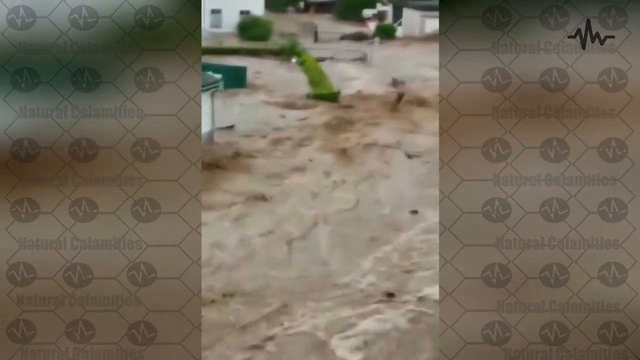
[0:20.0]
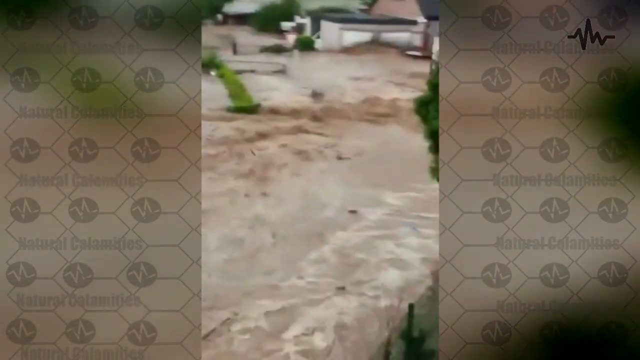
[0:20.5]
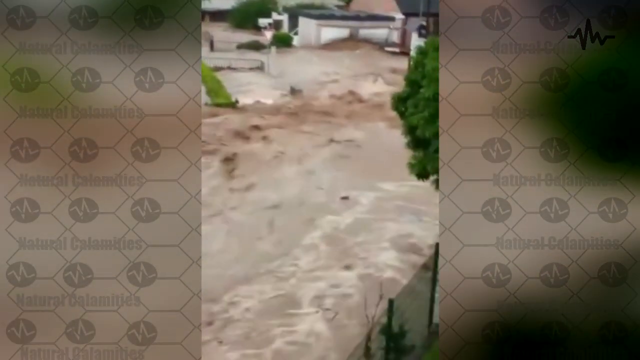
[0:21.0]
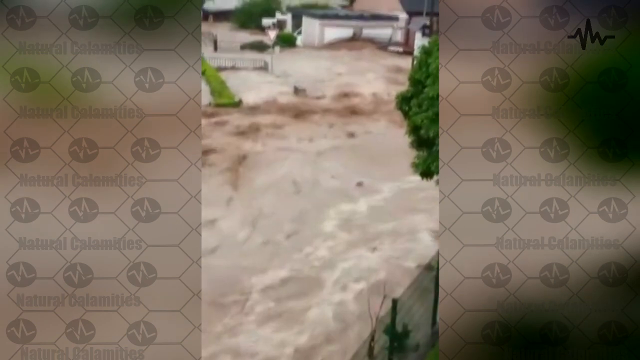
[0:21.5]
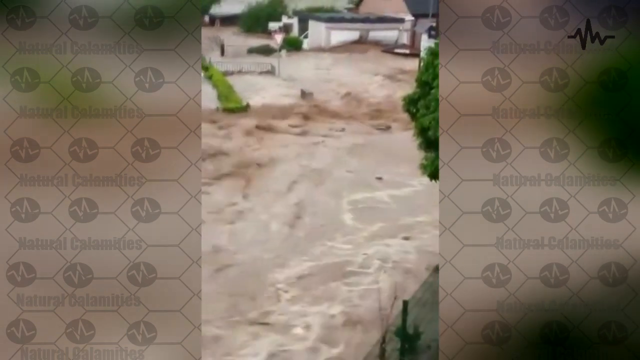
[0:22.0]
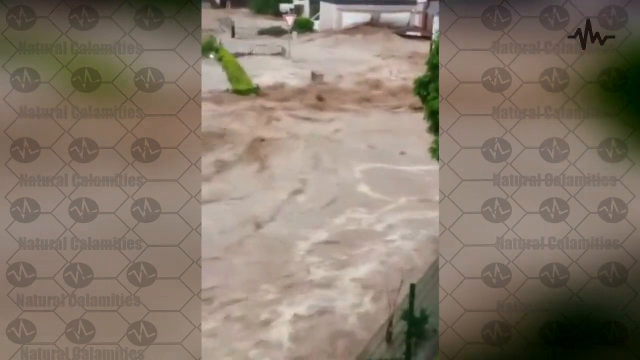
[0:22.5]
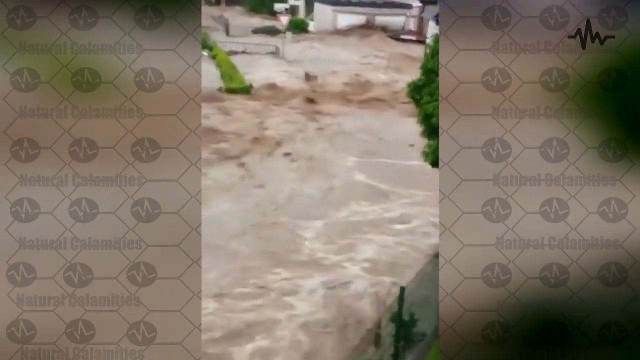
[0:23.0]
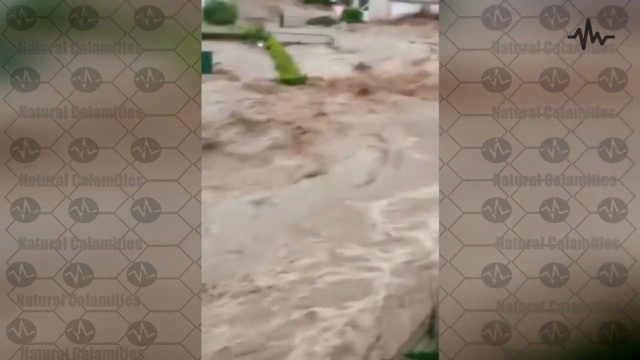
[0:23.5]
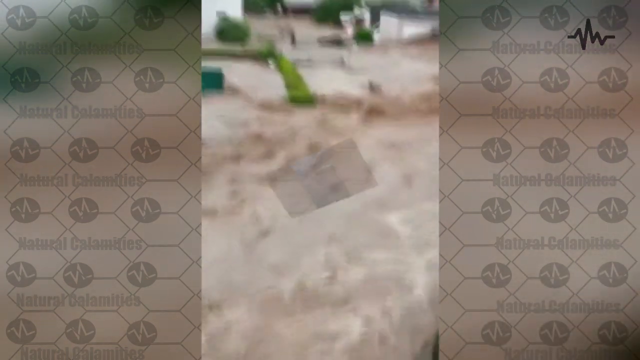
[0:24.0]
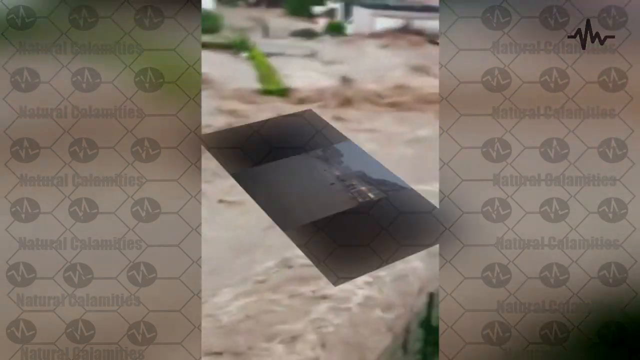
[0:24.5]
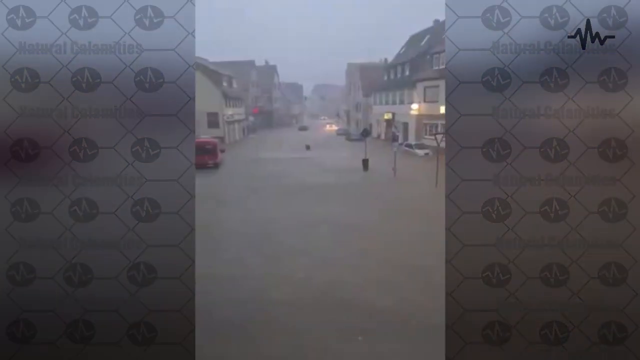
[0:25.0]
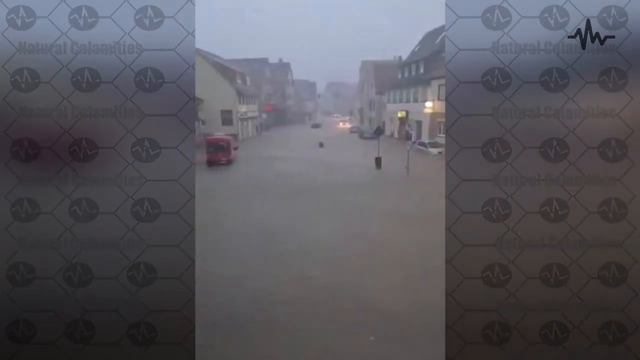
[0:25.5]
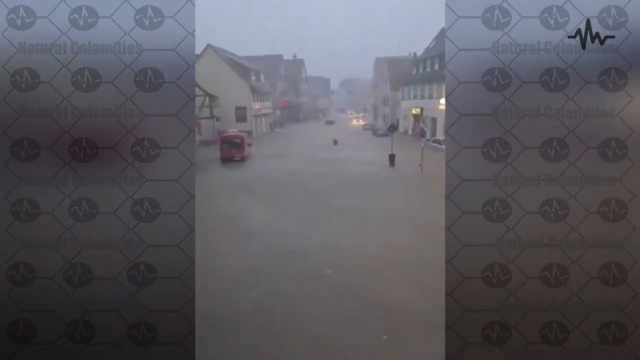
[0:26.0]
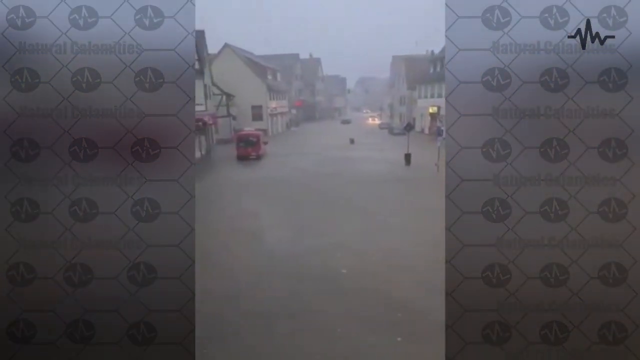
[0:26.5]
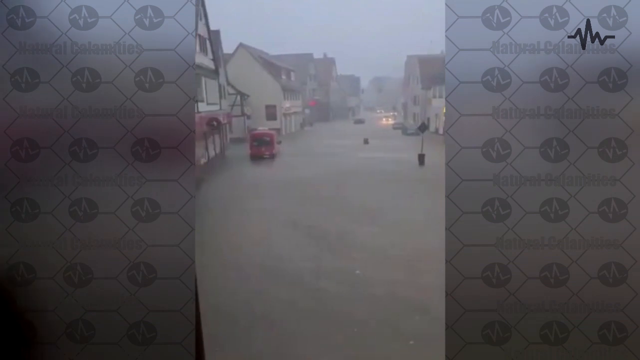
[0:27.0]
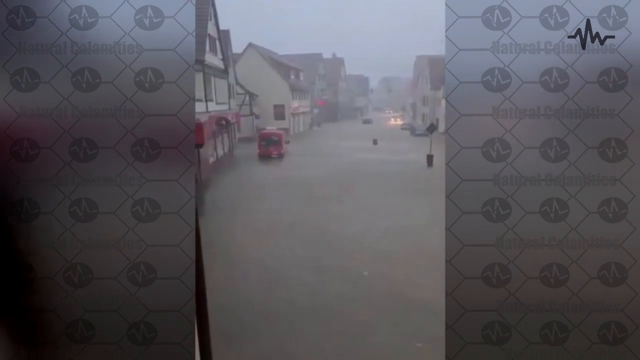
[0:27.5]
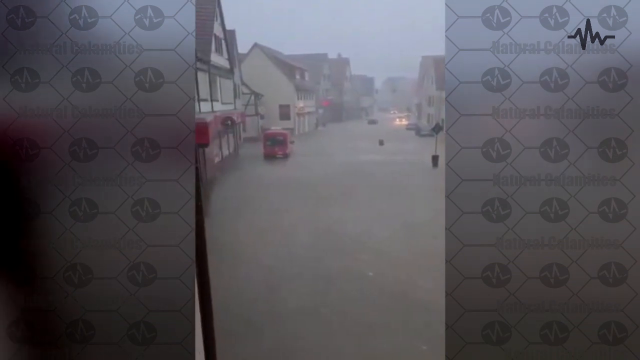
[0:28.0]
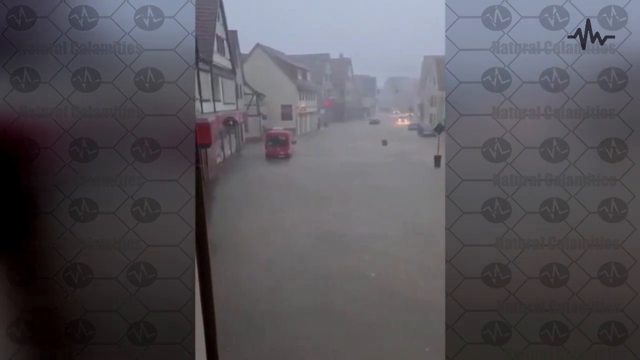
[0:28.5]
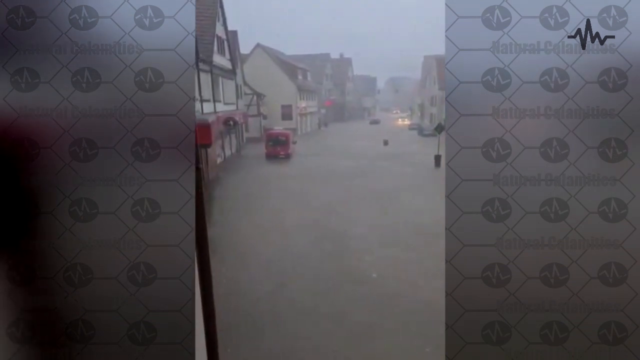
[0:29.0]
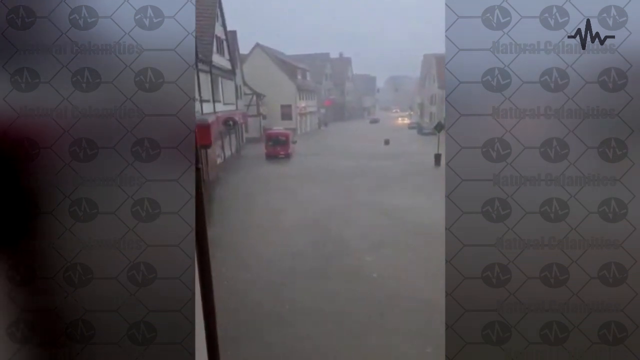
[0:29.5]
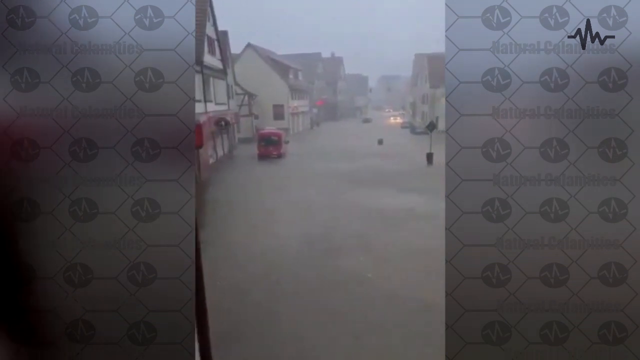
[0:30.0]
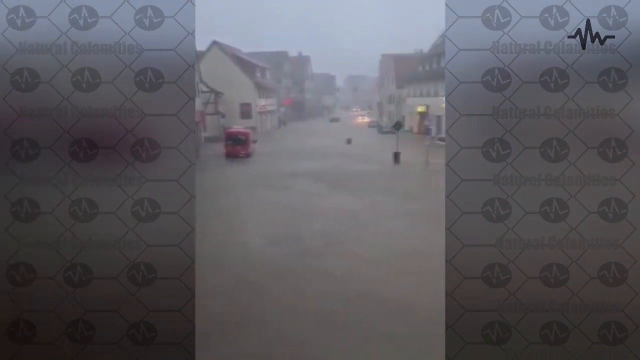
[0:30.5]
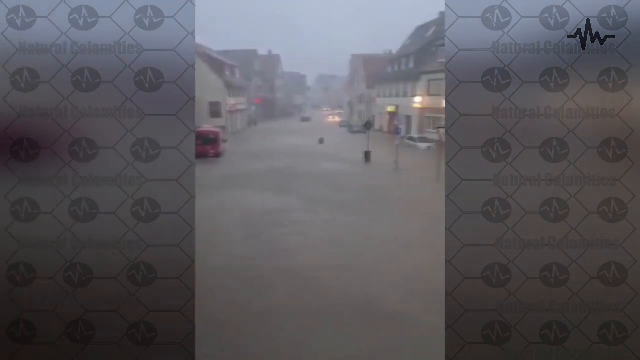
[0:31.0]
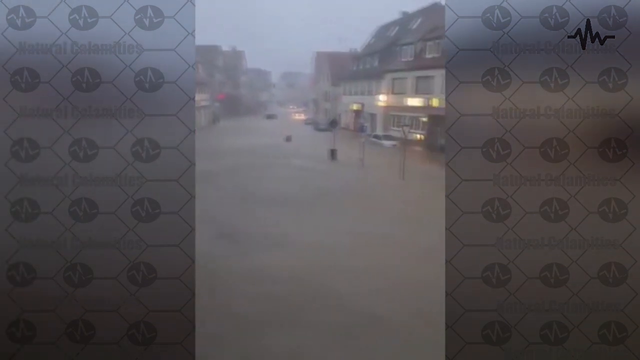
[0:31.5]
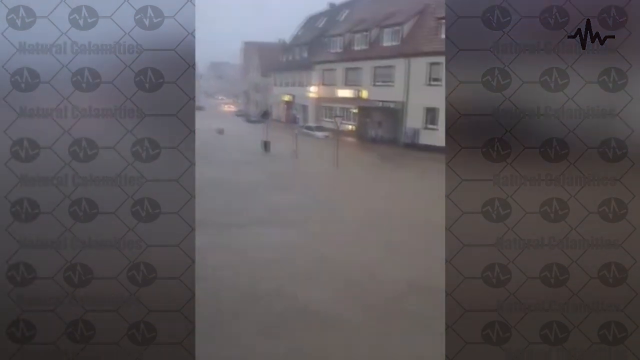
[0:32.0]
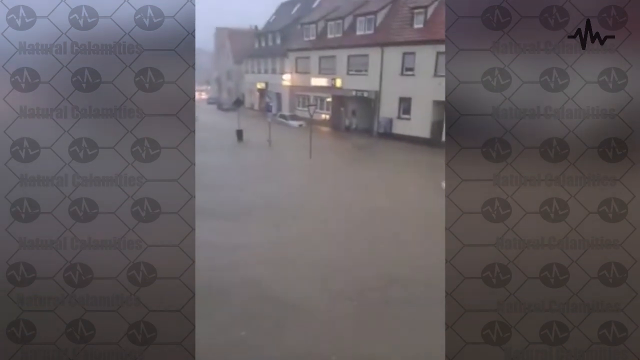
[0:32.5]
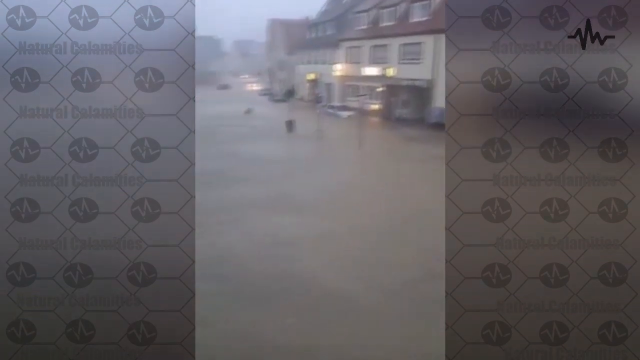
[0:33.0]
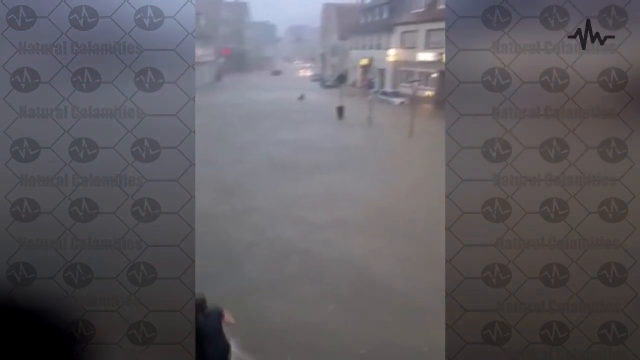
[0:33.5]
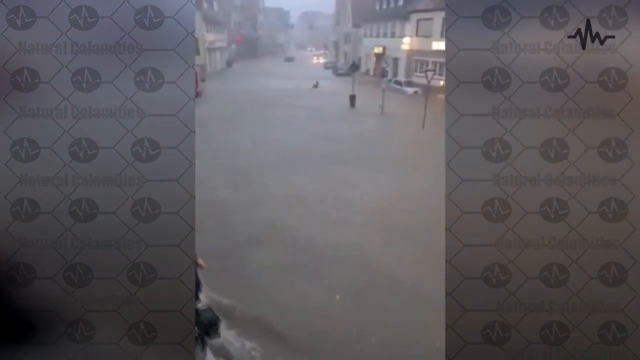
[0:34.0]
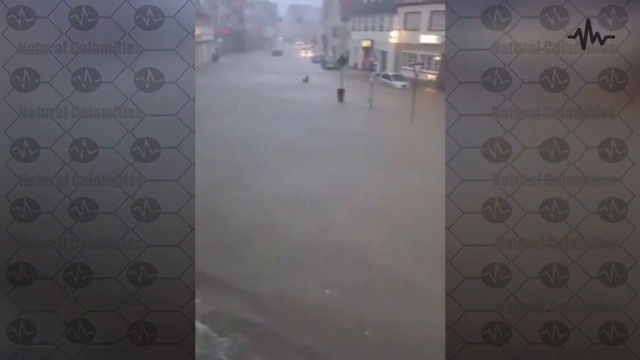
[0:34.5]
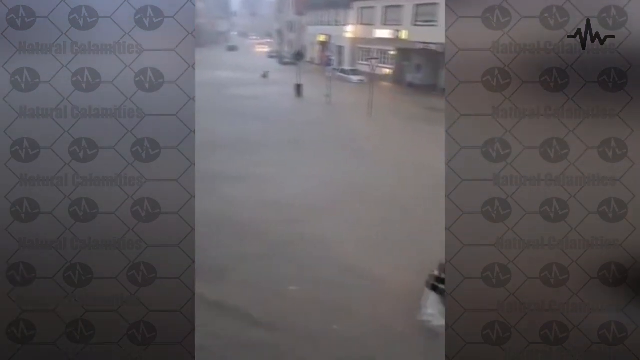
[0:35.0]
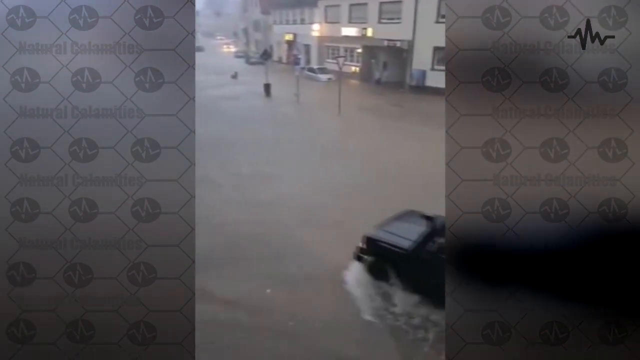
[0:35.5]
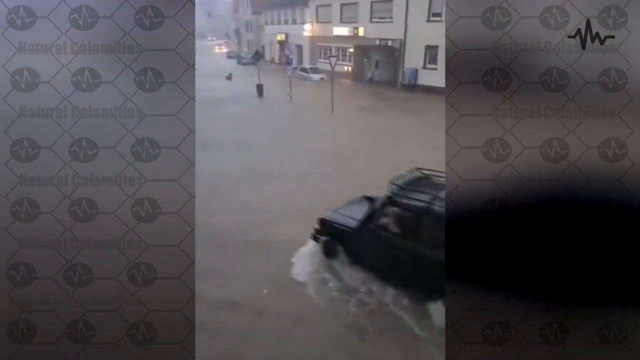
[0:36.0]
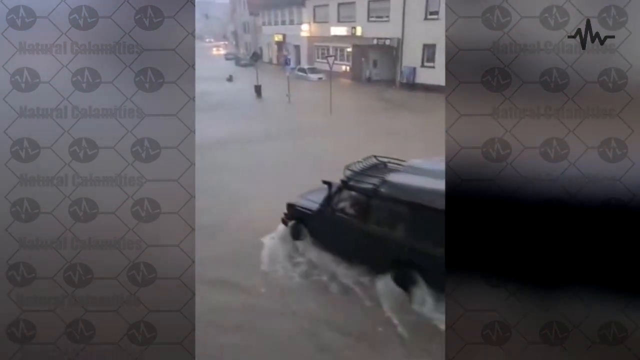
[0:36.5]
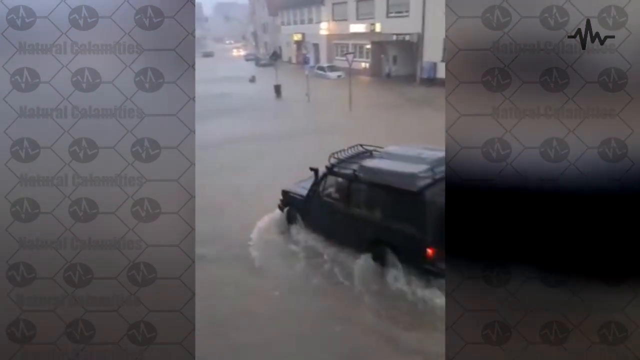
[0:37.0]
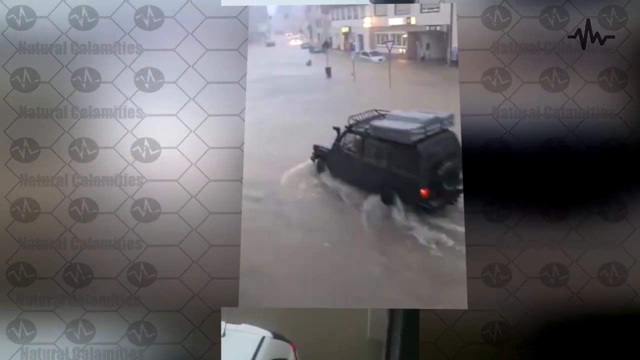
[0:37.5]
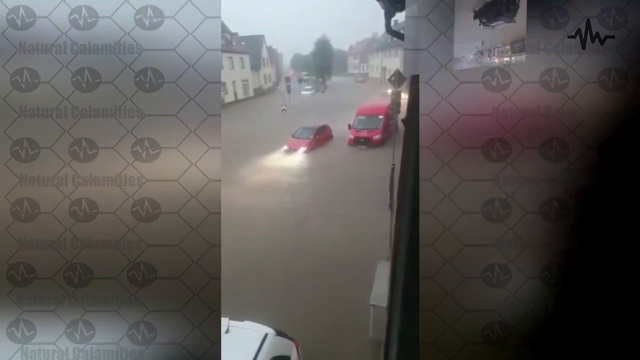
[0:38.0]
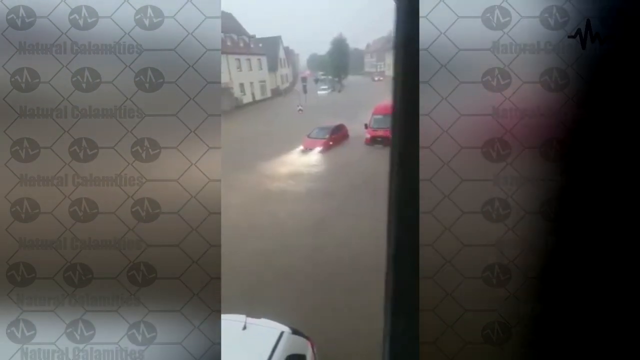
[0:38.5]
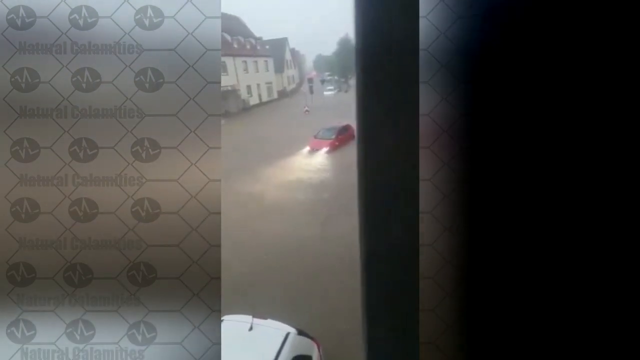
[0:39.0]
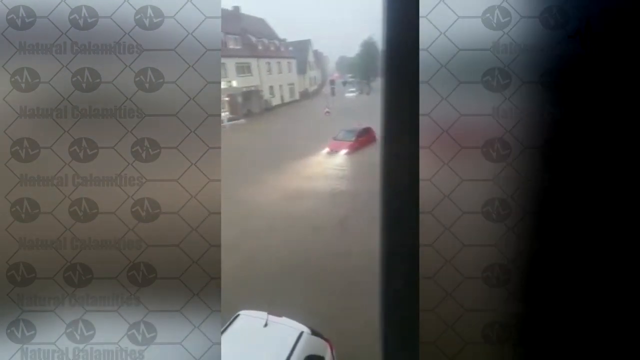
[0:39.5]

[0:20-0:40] Another perspective, from a camera window, shows the water static and not moving, with houses submerged by it.